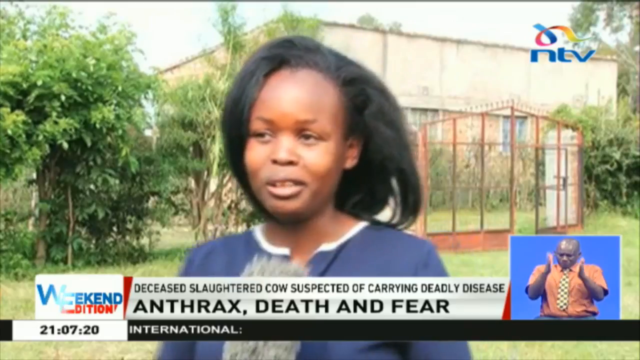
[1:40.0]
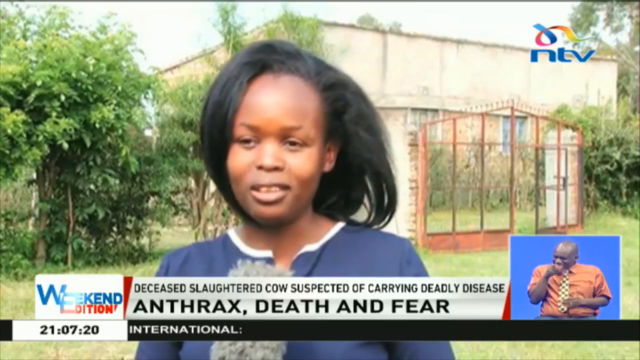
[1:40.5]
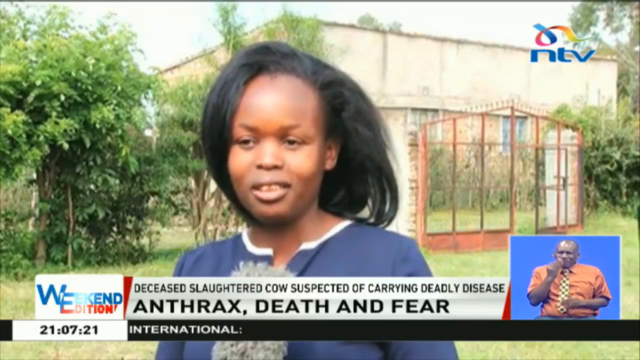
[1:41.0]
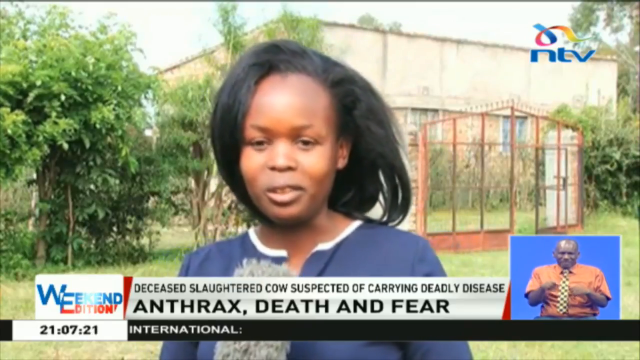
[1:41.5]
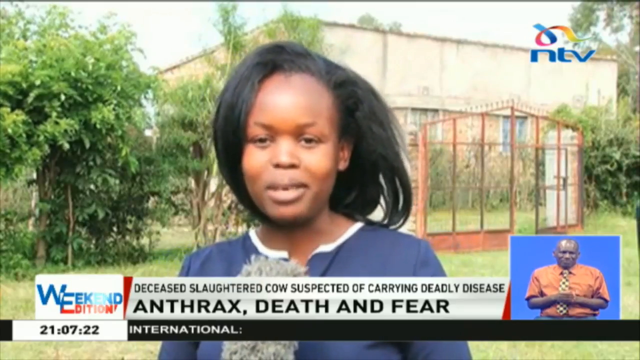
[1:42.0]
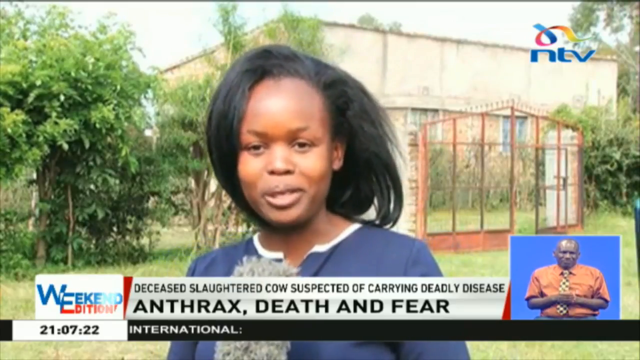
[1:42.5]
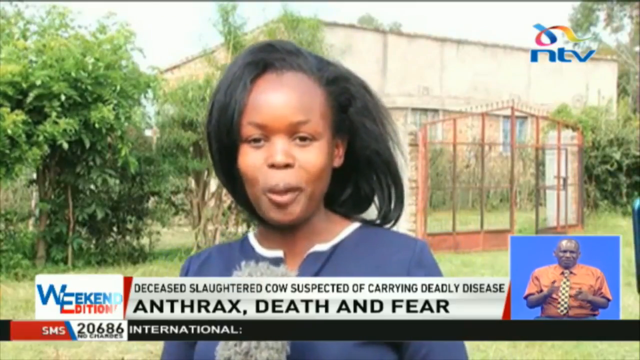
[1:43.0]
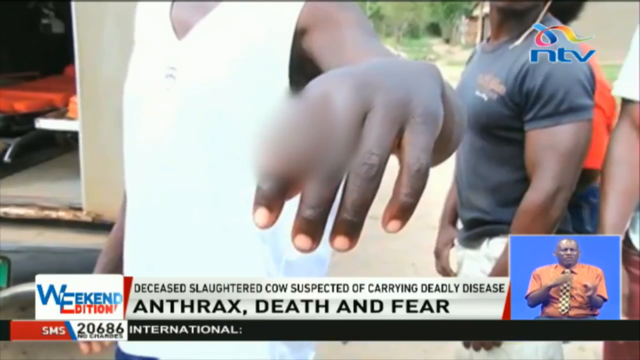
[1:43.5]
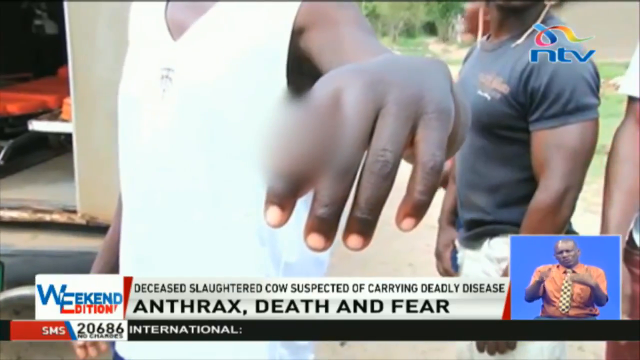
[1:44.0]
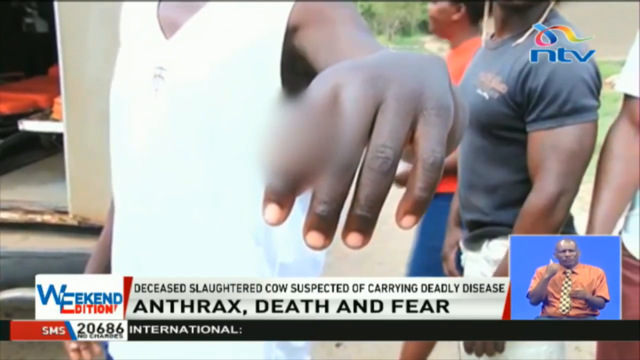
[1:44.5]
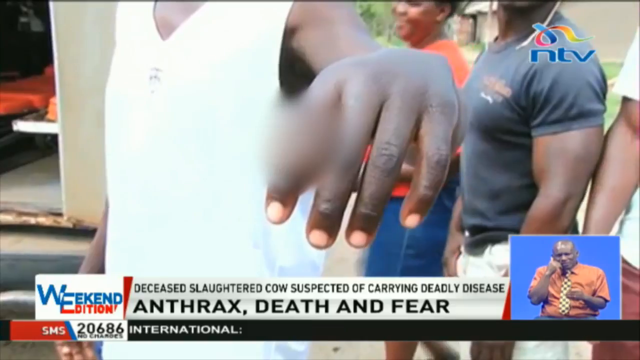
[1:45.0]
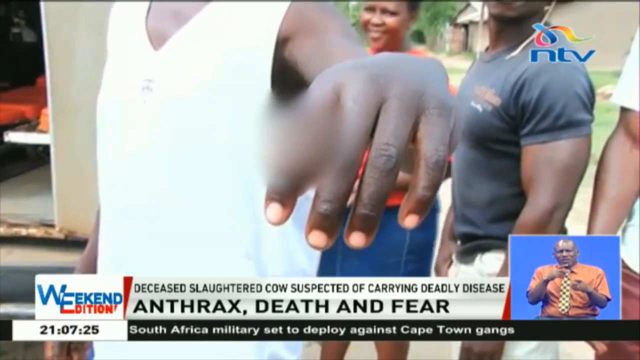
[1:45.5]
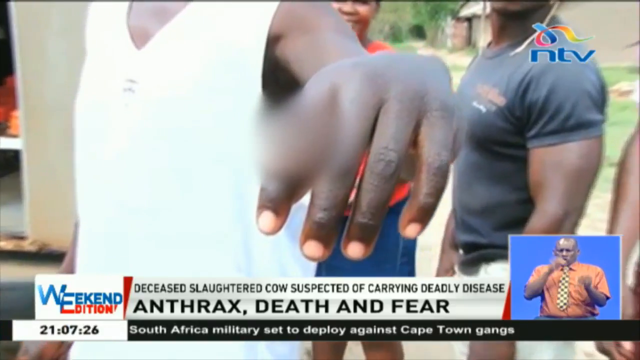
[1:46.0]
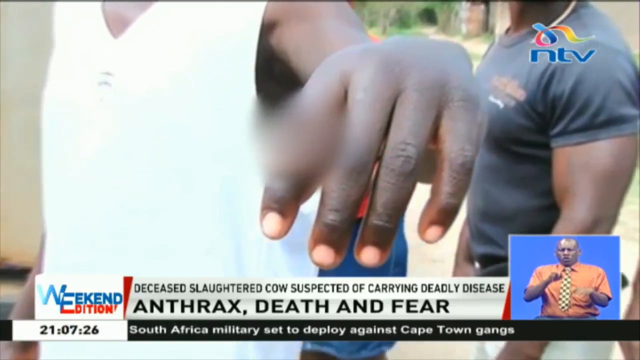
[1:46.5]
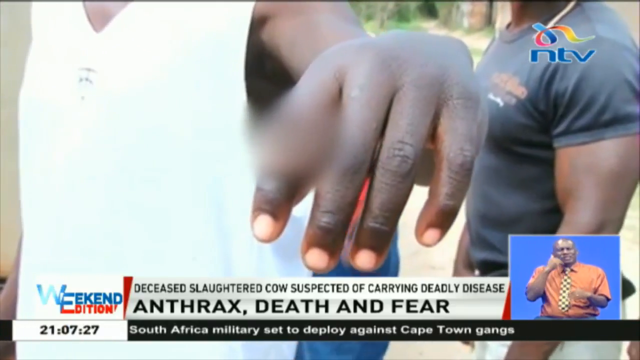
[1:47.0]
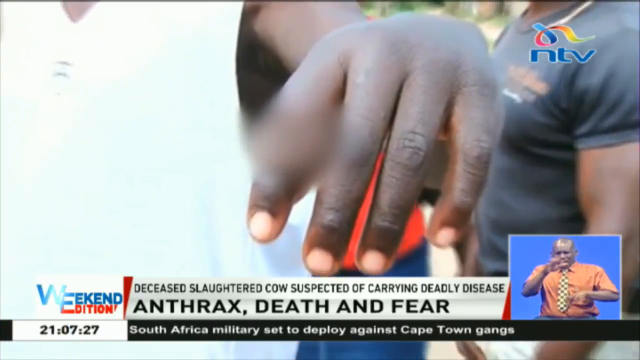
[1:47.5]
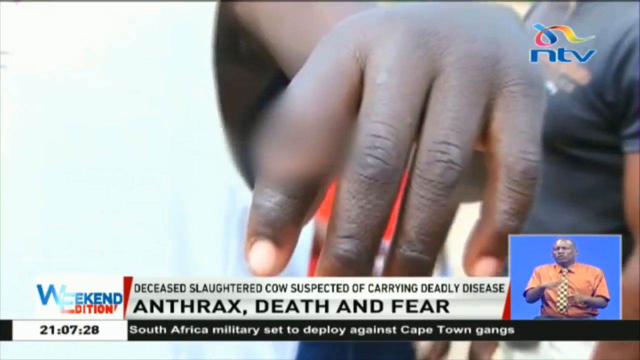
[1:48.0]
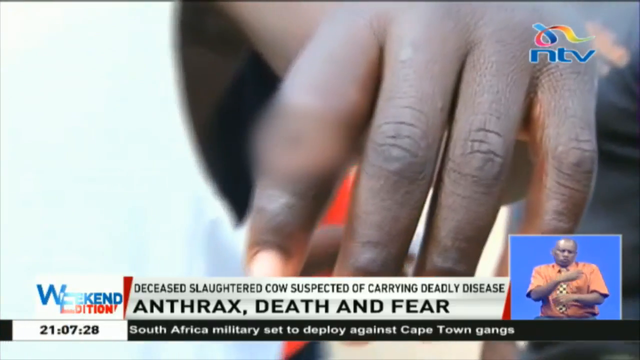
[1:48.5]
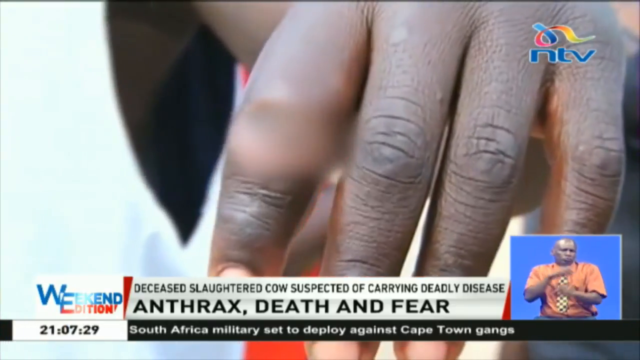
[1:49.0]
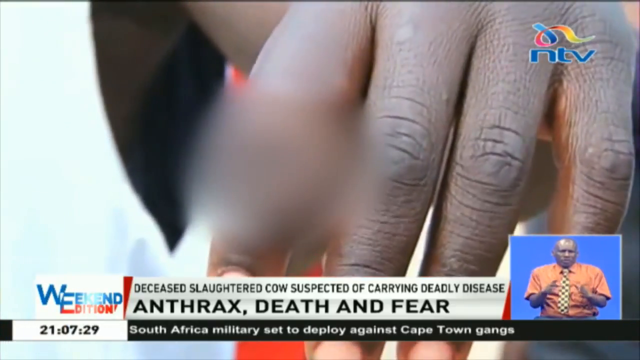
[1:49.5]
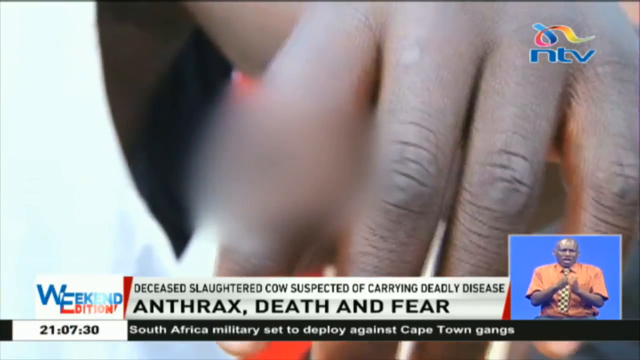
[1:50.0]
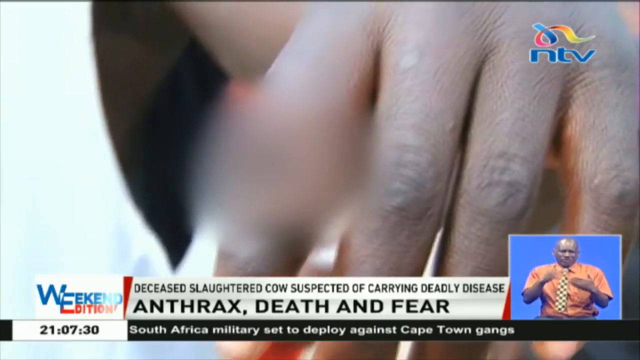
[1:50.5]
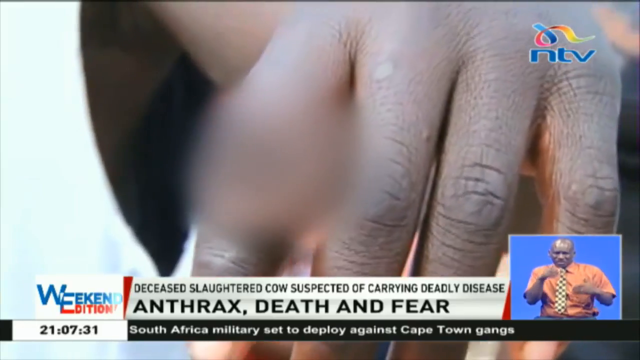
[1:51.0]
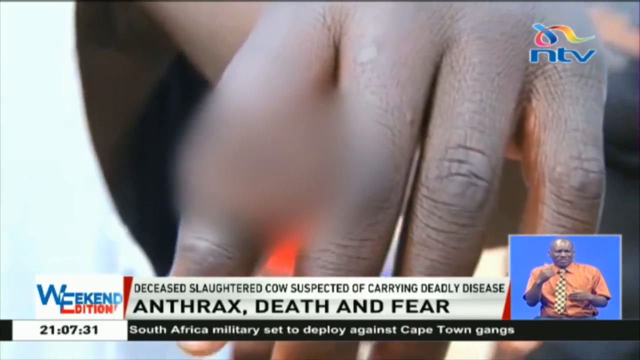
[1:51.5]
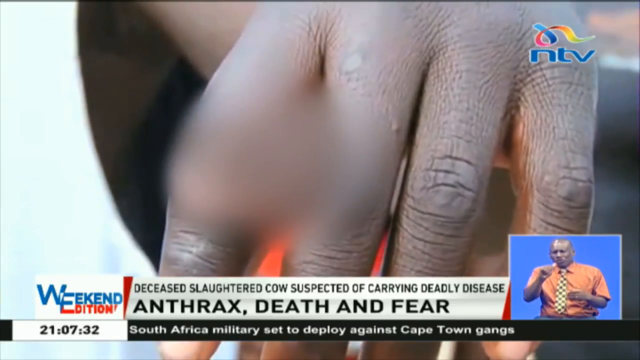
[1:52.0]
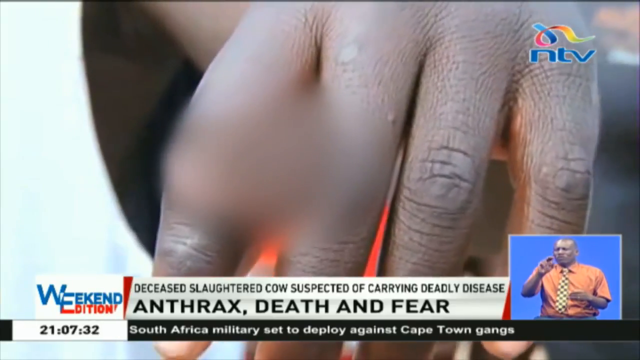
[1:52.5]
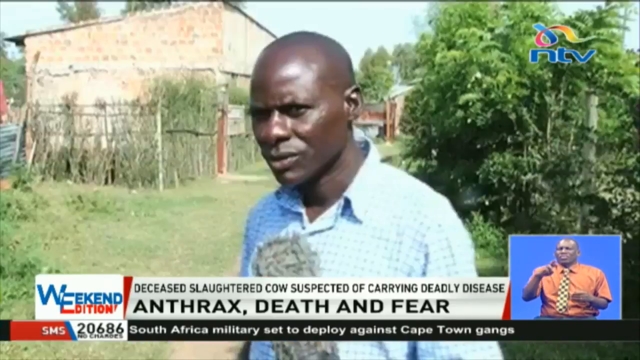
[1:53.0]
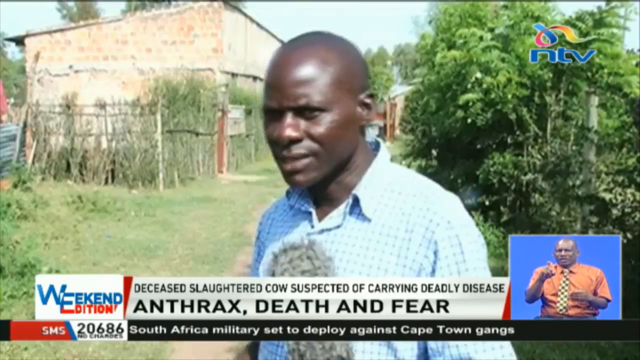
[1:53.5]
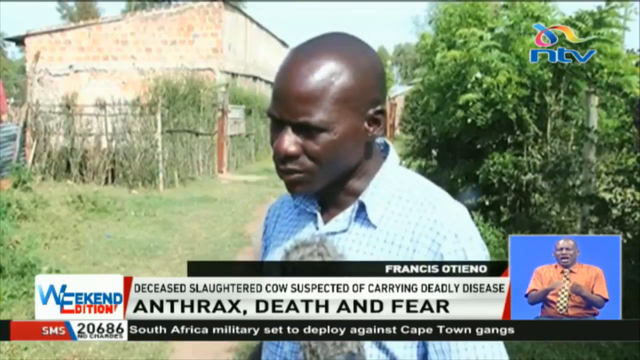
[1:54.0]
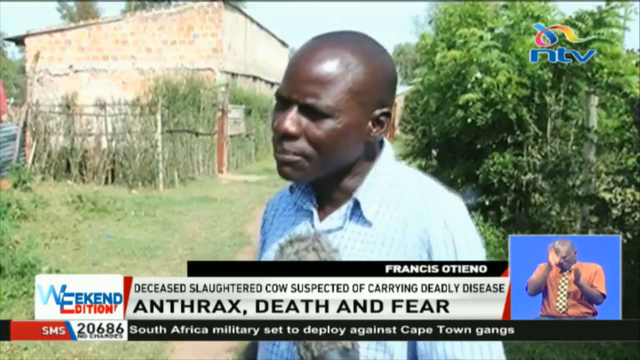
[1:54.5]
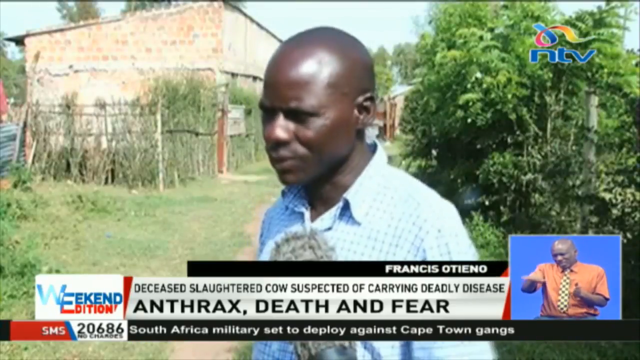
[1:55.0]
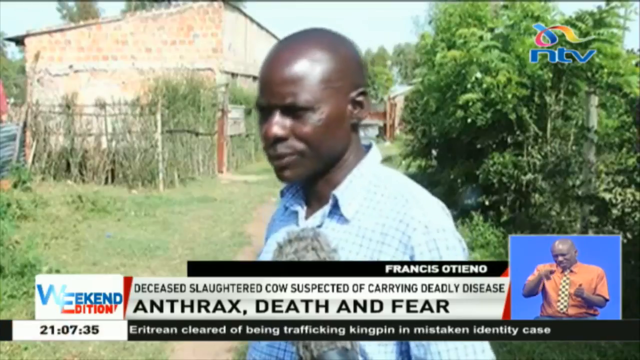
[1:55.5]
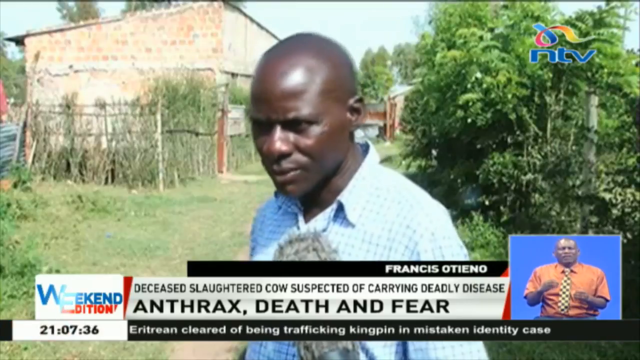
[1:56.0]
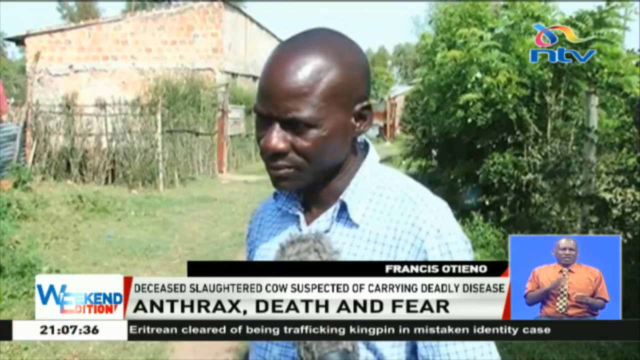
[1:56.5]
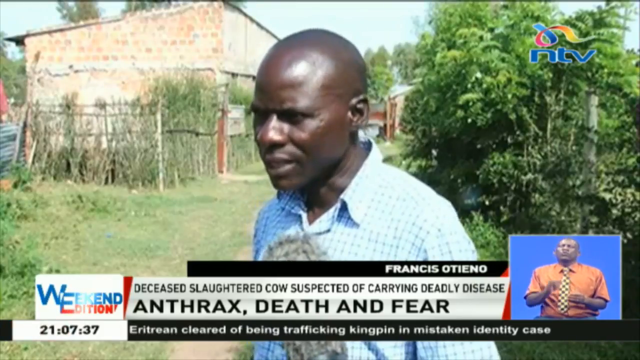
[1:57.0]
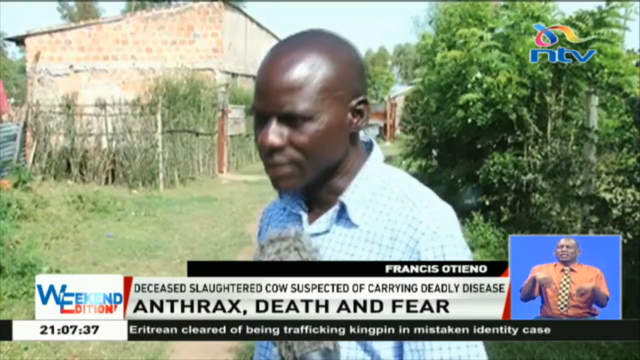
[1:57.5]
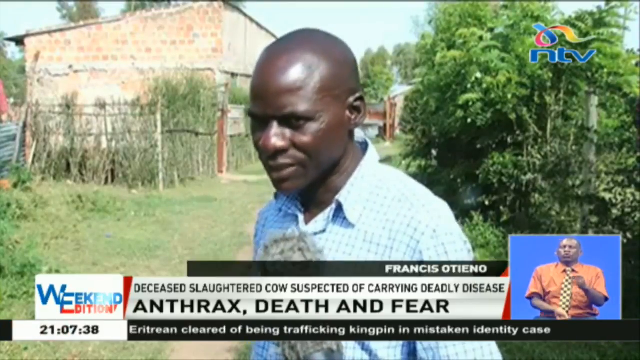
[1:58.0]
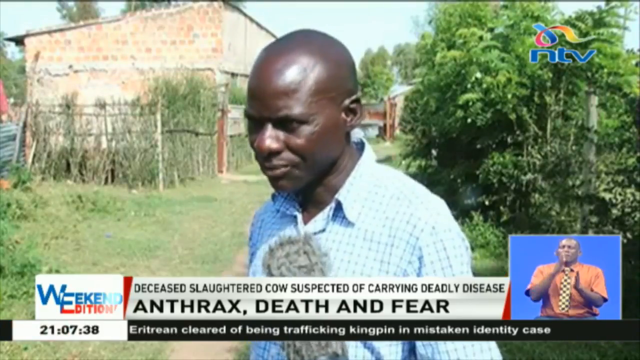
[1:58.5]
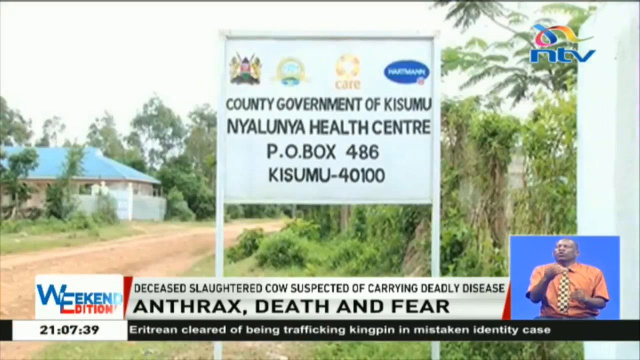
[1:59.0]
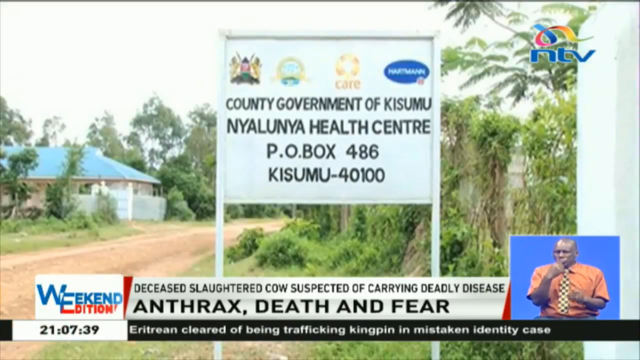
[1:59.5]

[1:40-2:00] A young African woman with straight, roughly shoulder-length black hair, wearing a blue shirt with a white collar, is interviewed and smiles as she speaks. The scene changes to a person in a white sleeveless shirt holding a hand up to the camera, with a blurred area over the index finger, possibly an injury; the camera kind of zooms in a bit closer to the finger. A bald African man in a blue and white checkered button-up shirt is then interviewed, and a black rectangular box pops up at the bottom reading "Francis Otieno". He stands in a grassy area with kind of a small tan brick house to the left and tall green hedges to the right. Then a large white square sign appears, with some logos at the top and black text reading "County Government of Kisumu Nyalunya Health Center P.O. Box 486 Kisumu-40100".